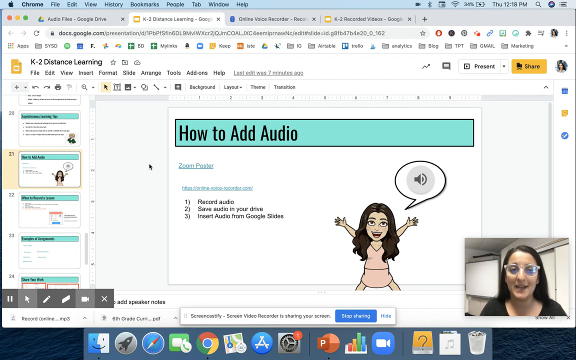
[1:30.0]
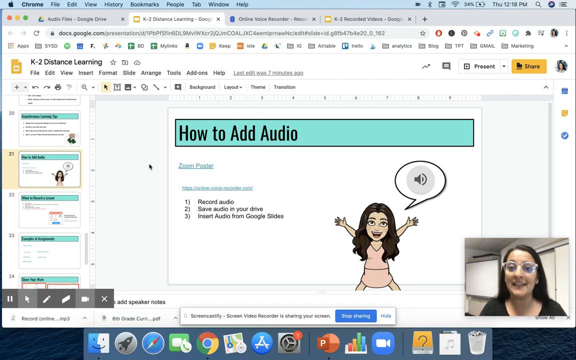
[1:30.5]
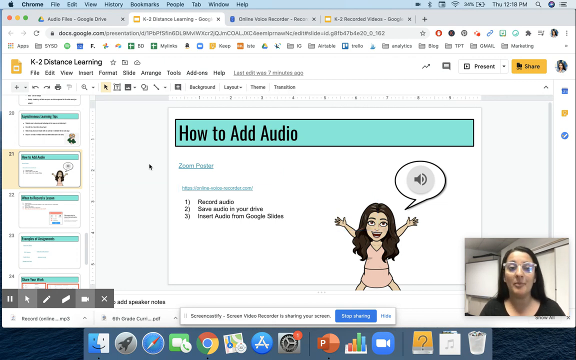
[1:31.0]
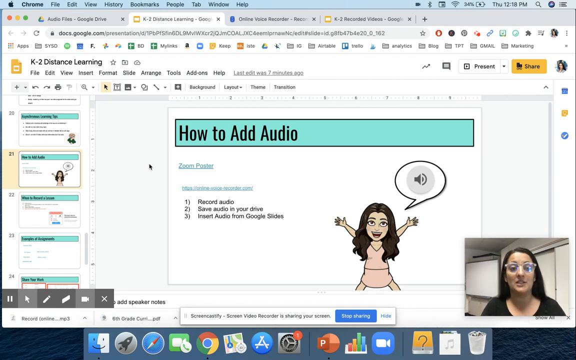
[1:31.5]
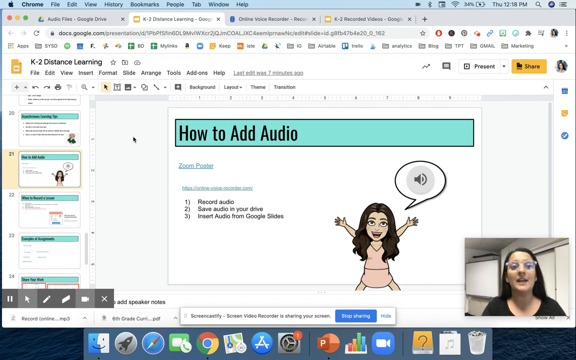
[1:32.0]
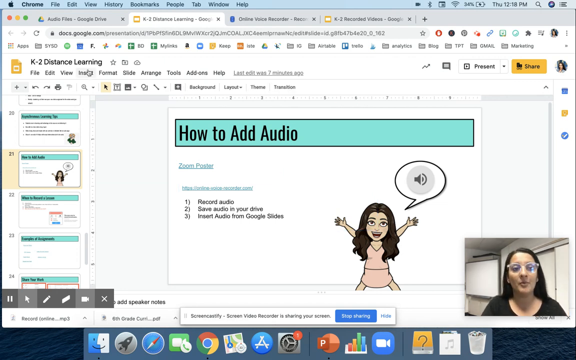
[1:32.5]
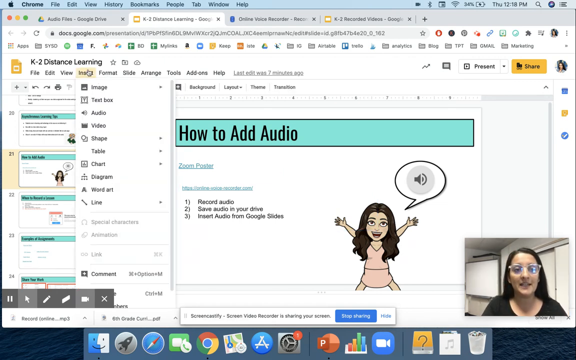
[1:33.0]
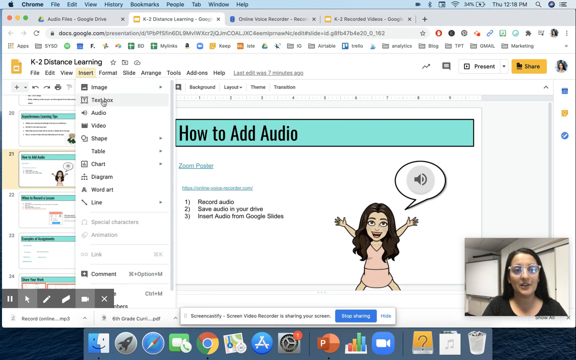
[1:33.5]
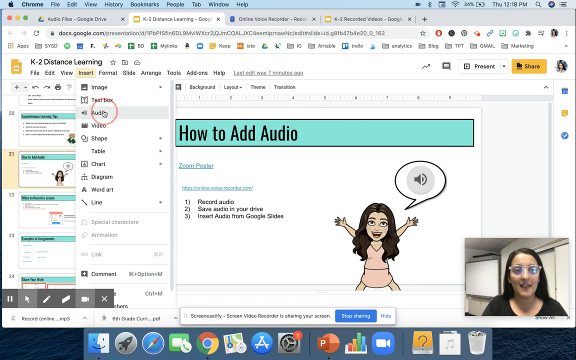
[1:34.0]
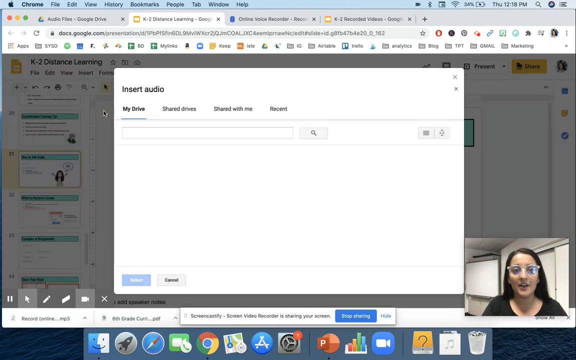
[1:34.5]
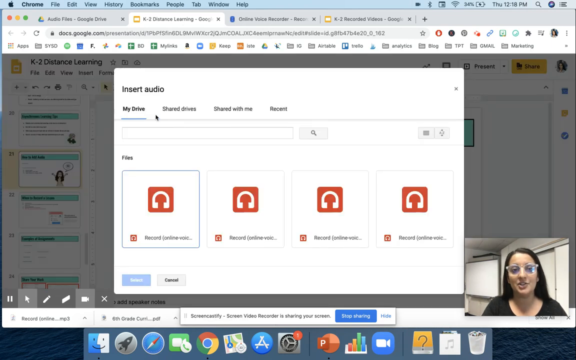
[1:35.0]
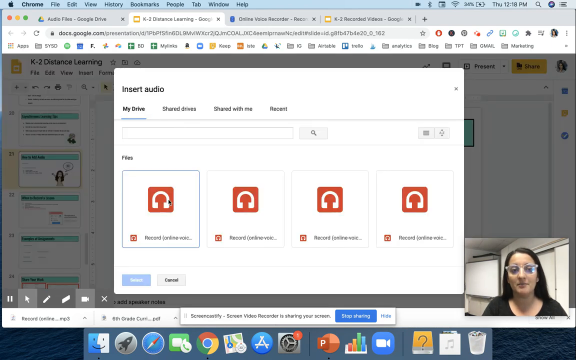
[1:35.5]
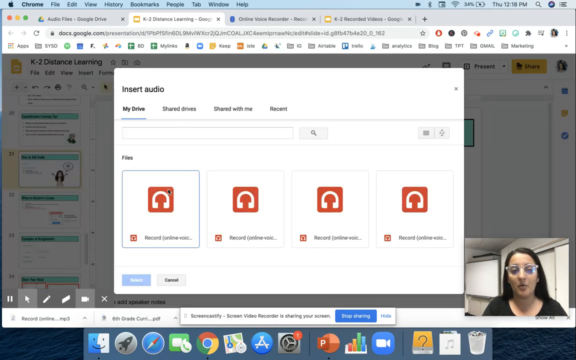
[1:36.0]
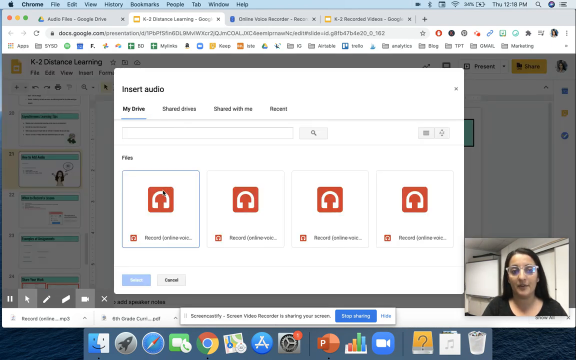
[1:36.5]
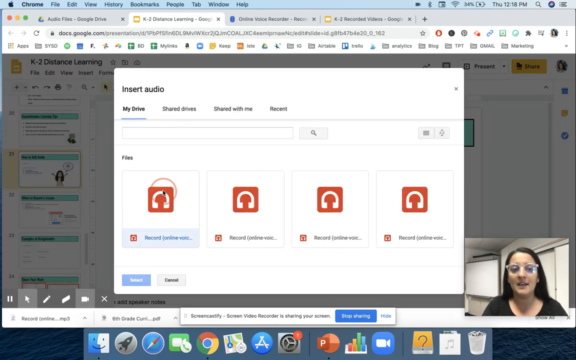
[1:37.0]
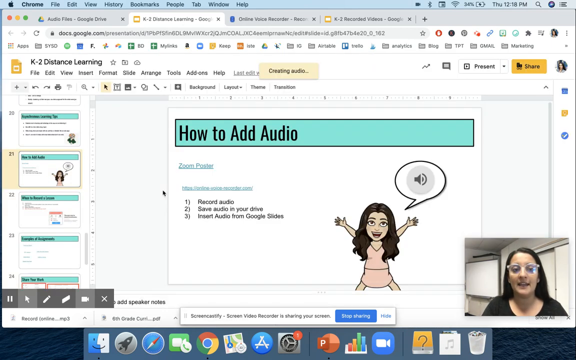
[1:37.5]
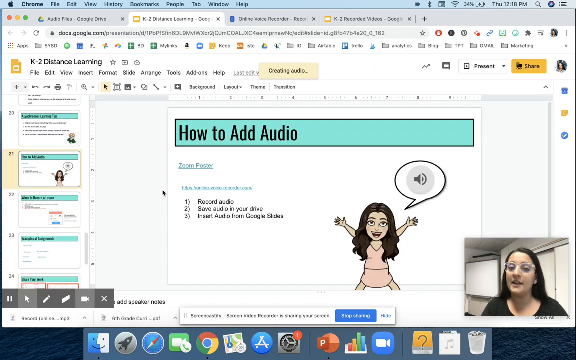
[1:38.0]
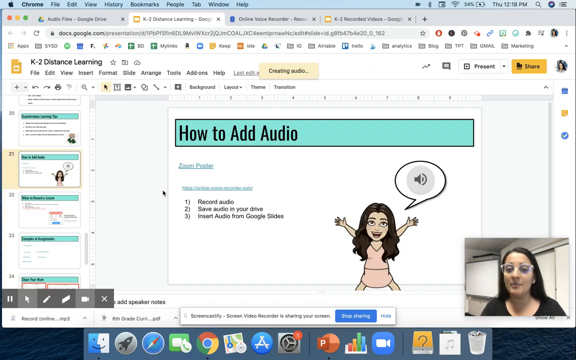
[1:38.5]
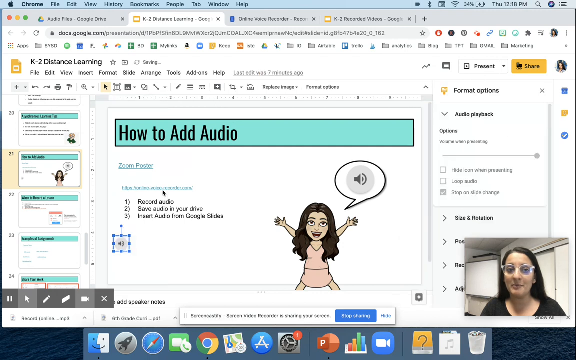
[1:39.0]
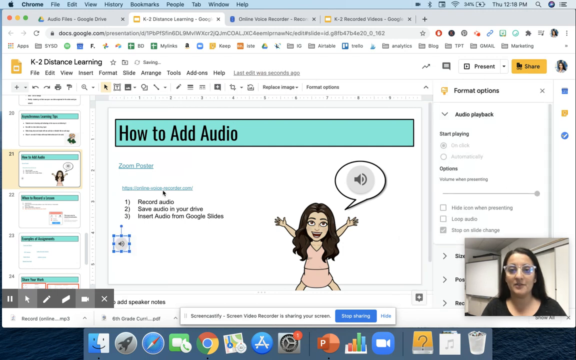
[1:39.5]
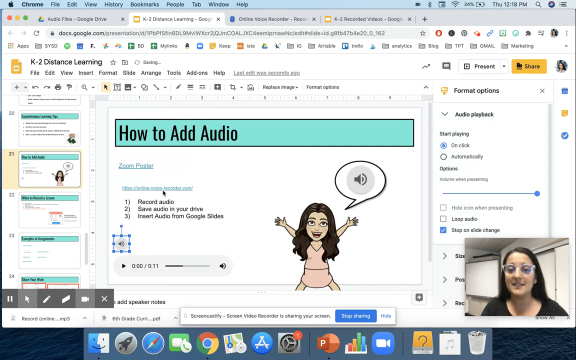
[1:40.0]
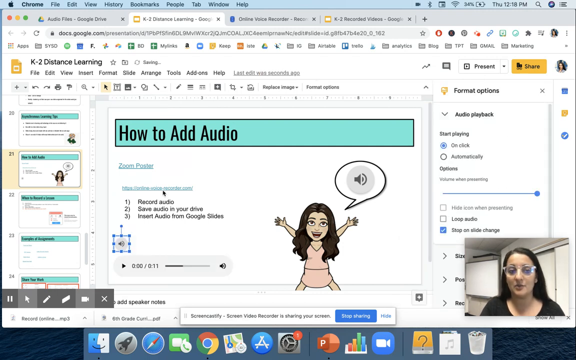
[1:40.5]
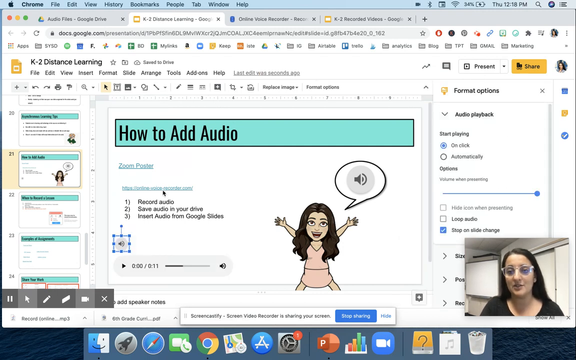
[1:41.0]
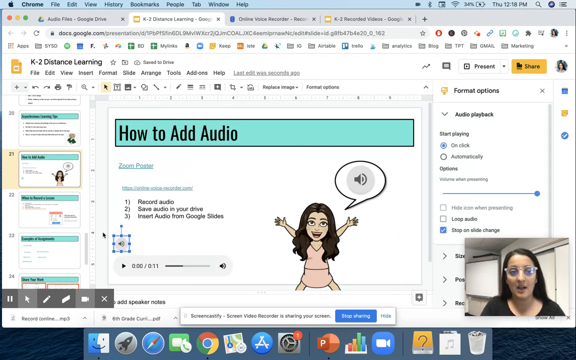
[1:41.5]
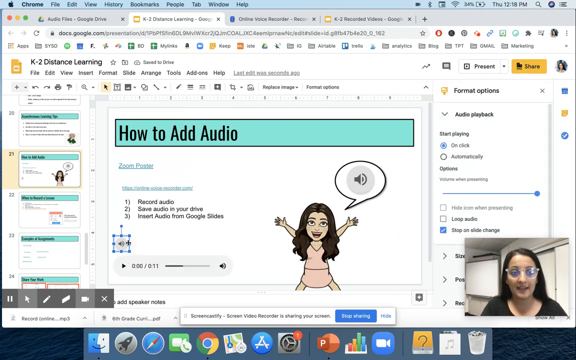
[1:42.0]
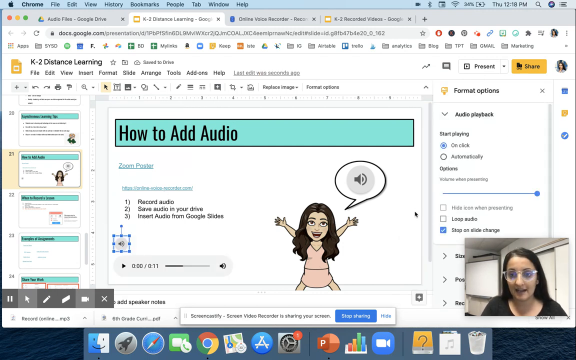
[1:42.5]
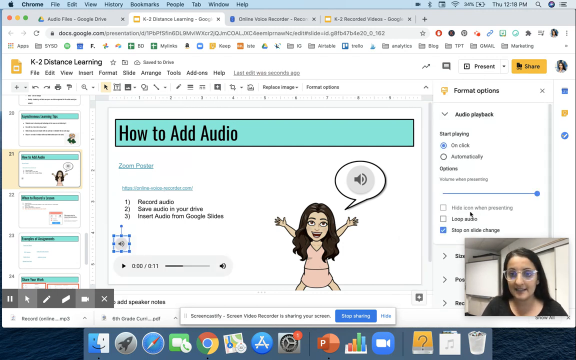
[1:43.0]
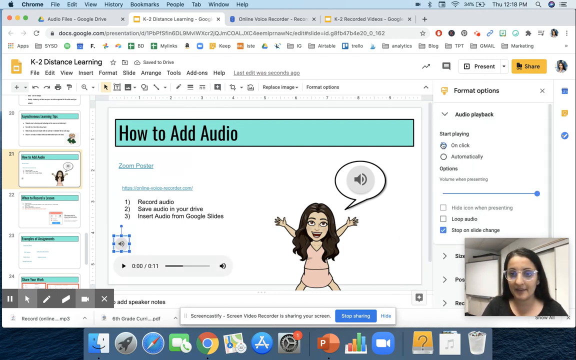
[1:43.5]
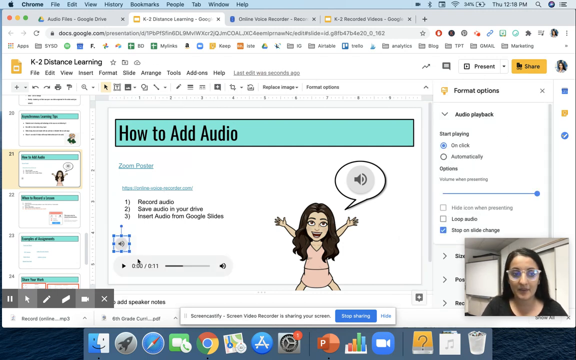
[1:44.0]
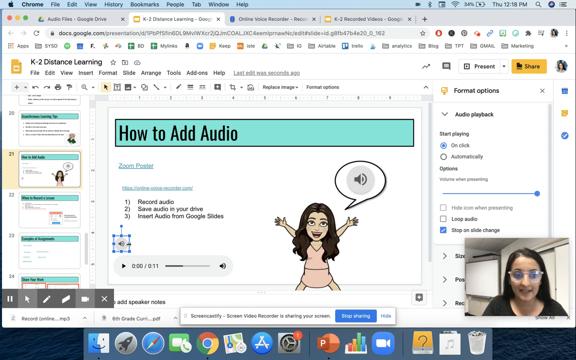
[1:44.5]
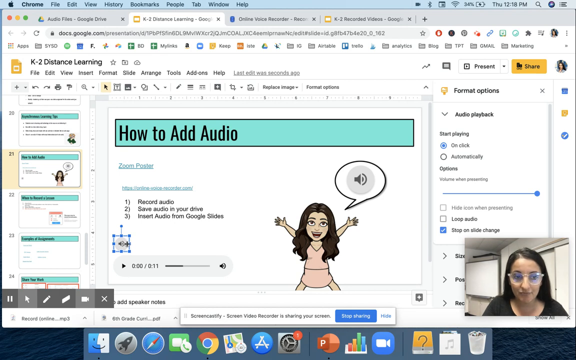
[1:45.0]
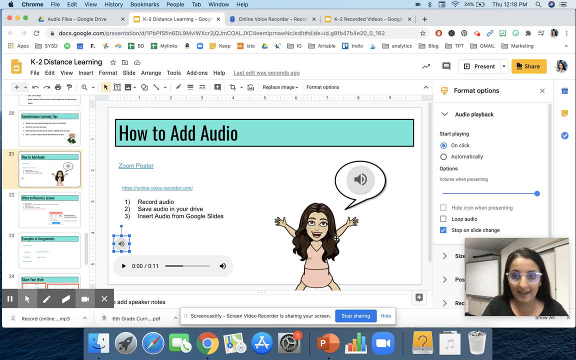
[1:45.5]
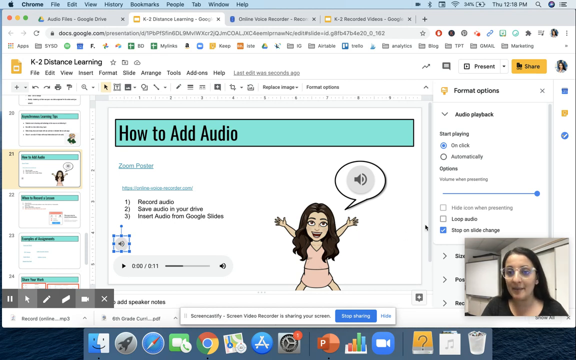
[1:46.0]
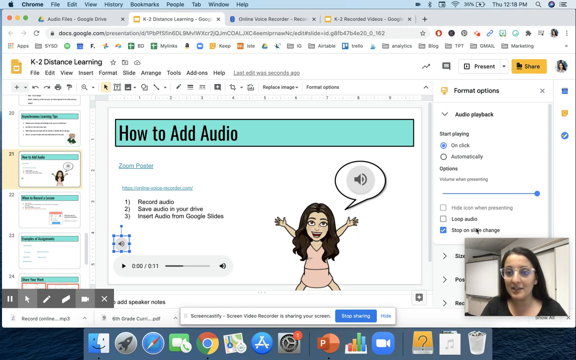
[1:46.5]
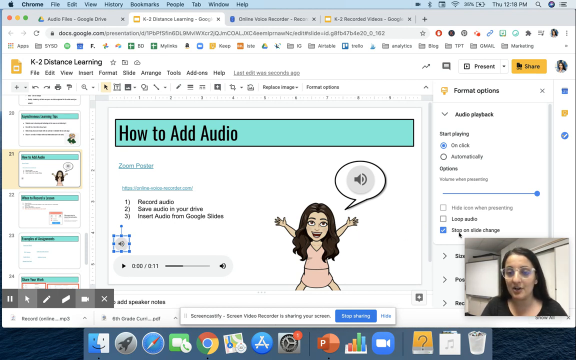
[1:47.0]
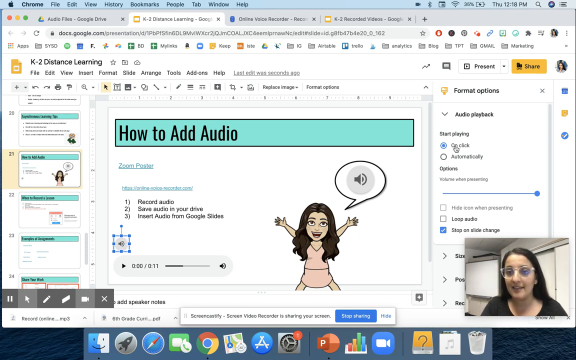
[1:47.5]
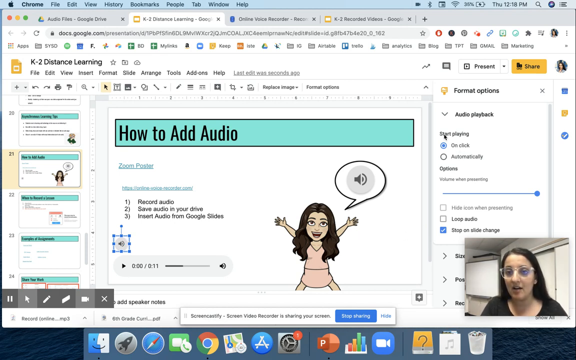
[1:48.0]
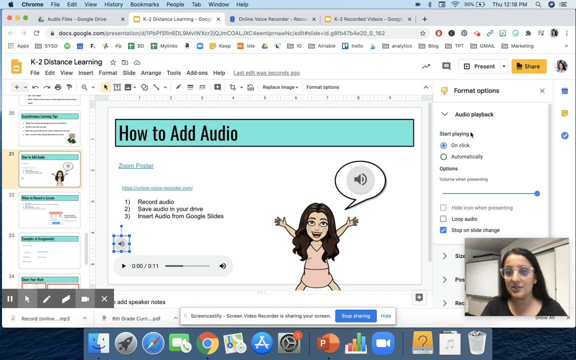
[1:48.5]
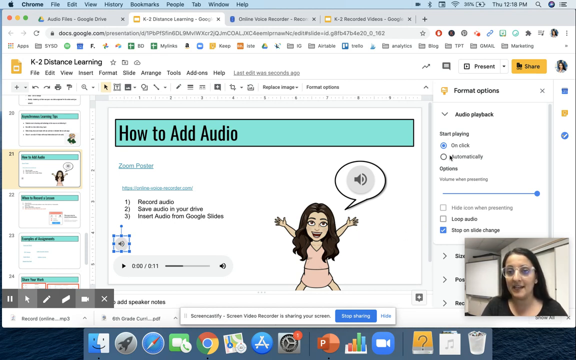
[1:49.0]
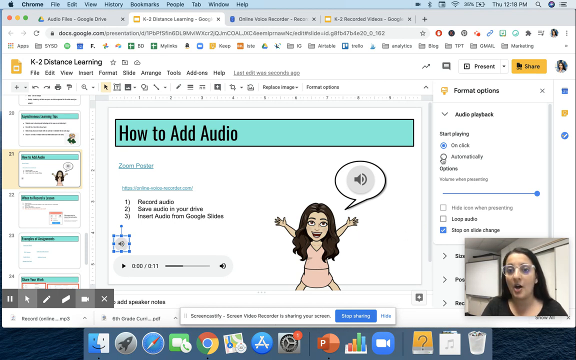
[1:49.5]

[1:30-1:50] The shared screen shows a Google Slides presentation called "how to add audio" with a few steps for doing so. In the bottom right-hand corner is a woman, presumably the teacher, who appears to be in her mid to late 20s, with long brown hair, clear glasses and a black top; she talks throughout and seems to be navigating the screen with her mouse. She goes to the Insert tab beneath the presentation title at the top left, navigates to the Audio tab, and selects the new audio file that was just added in Google Drive. The new audio is added to the title slide. She then moves to the format options for audio playback on the right and hovers over the options to start playing on click or automatically, followed by checkboxes for "loop audio" and "stop on slide change." After hovering over several of the options, she clicks on automatically.